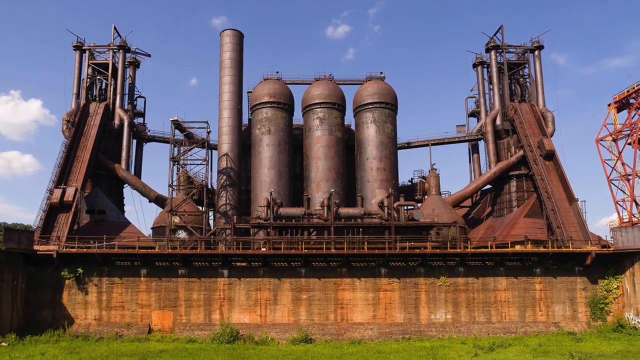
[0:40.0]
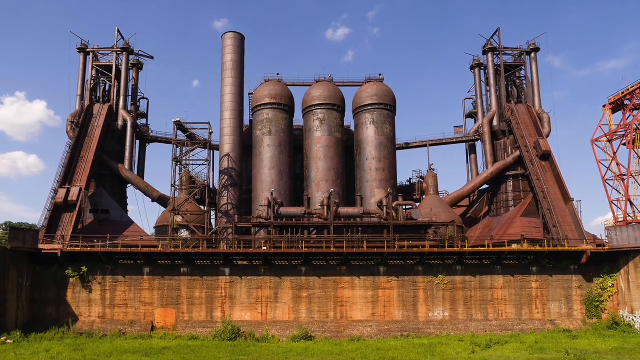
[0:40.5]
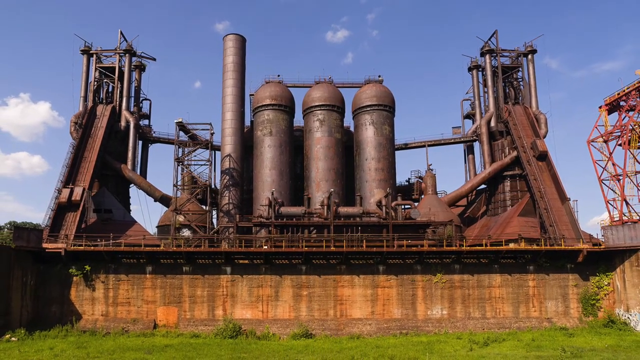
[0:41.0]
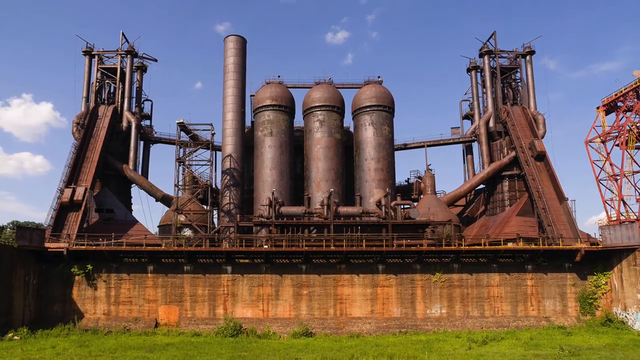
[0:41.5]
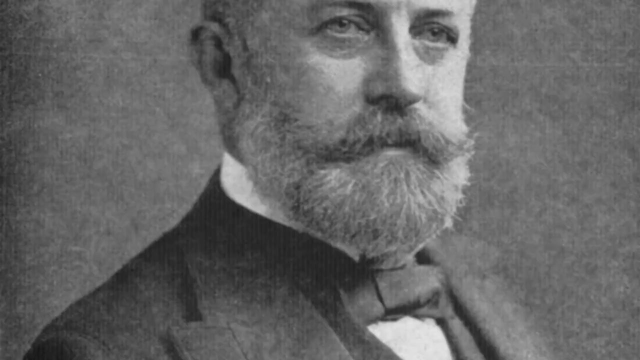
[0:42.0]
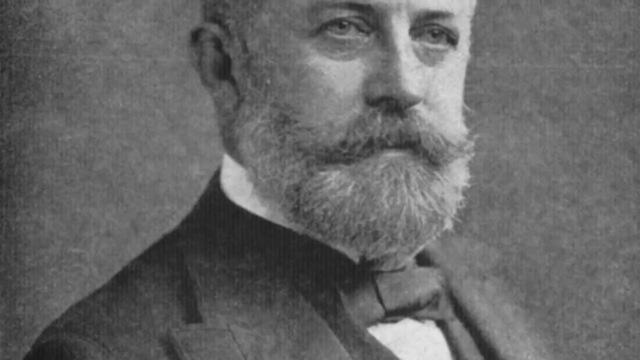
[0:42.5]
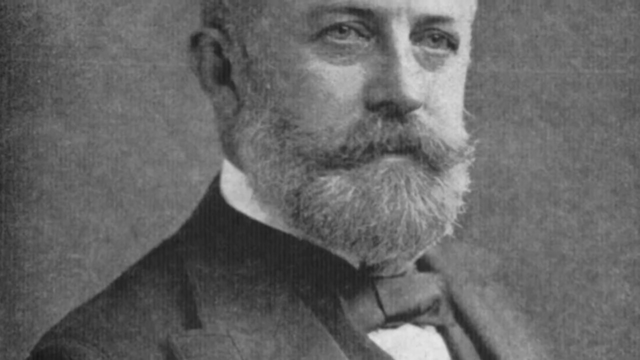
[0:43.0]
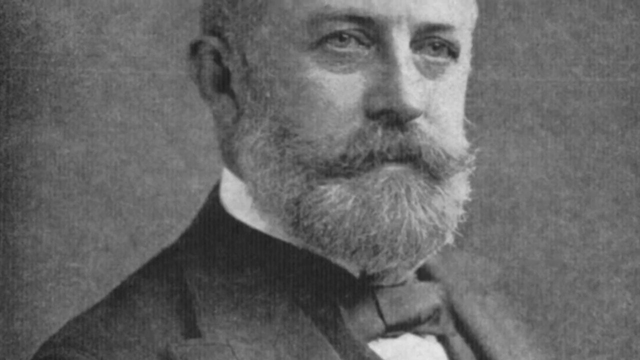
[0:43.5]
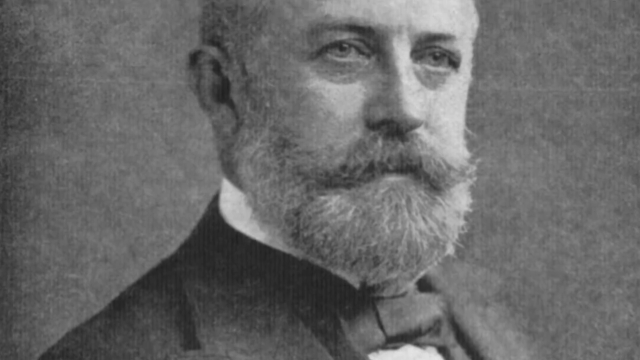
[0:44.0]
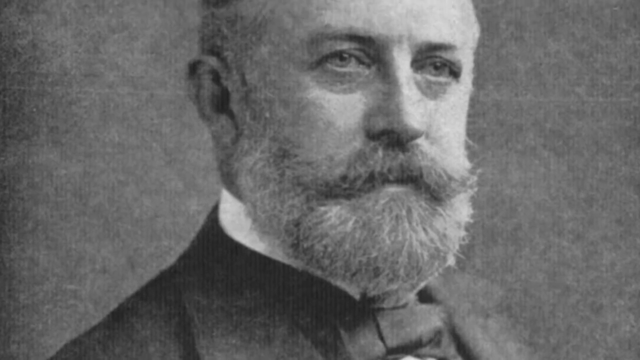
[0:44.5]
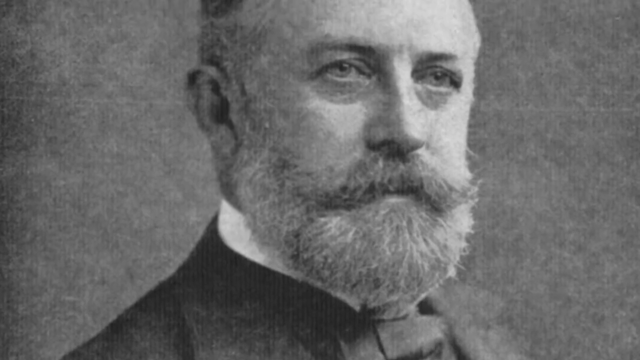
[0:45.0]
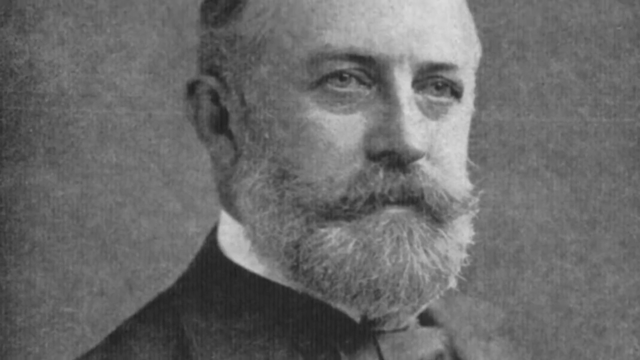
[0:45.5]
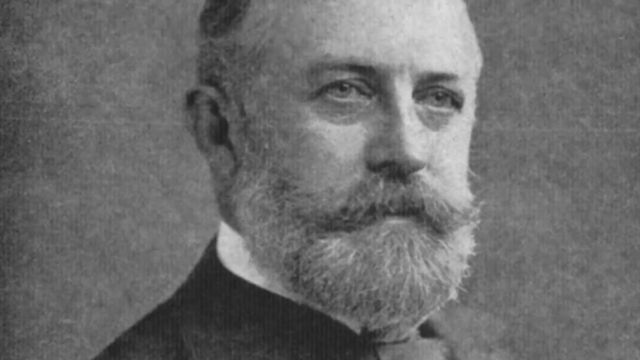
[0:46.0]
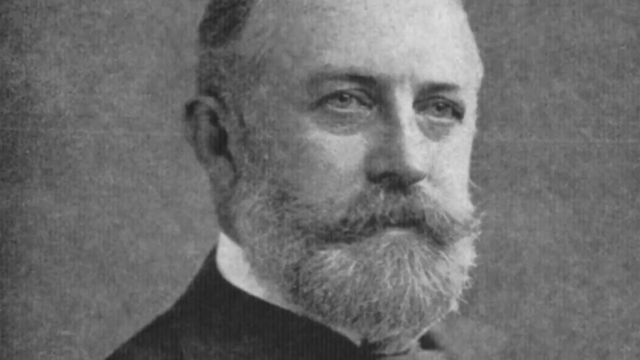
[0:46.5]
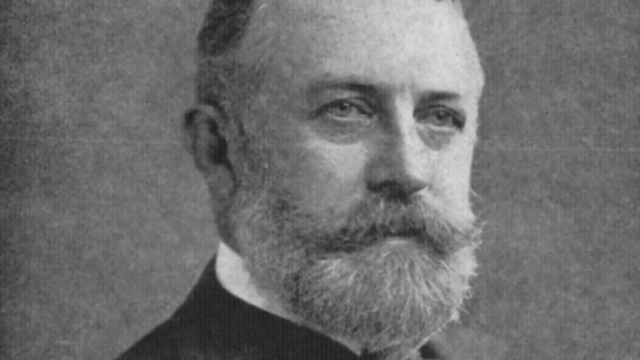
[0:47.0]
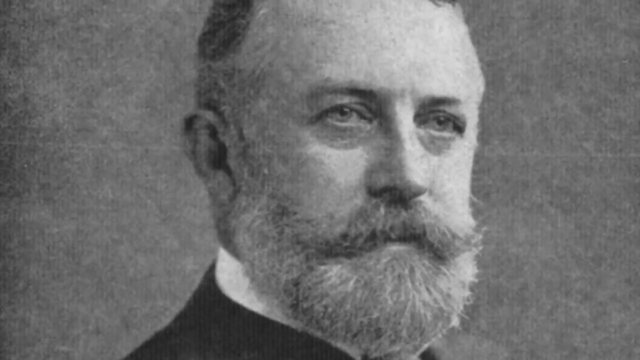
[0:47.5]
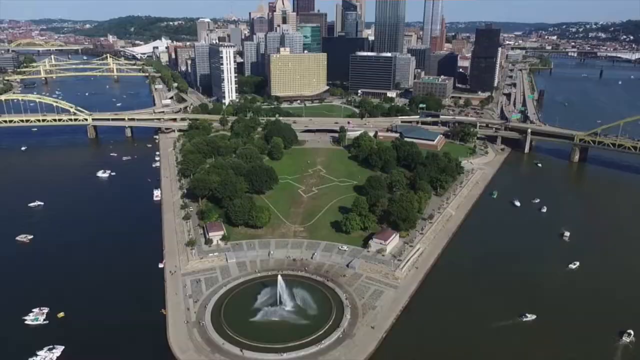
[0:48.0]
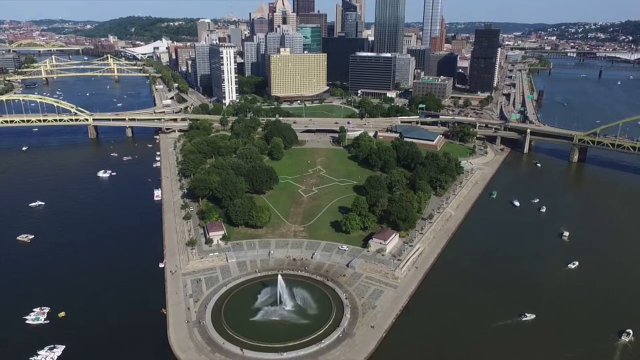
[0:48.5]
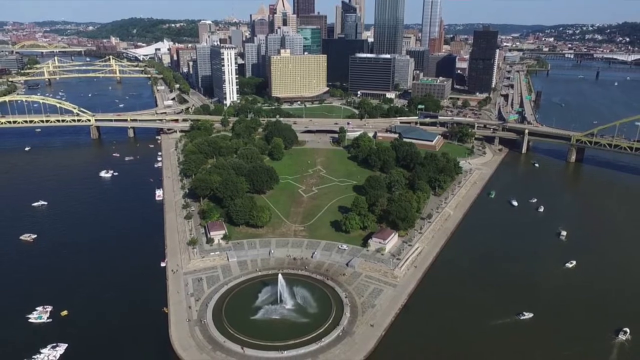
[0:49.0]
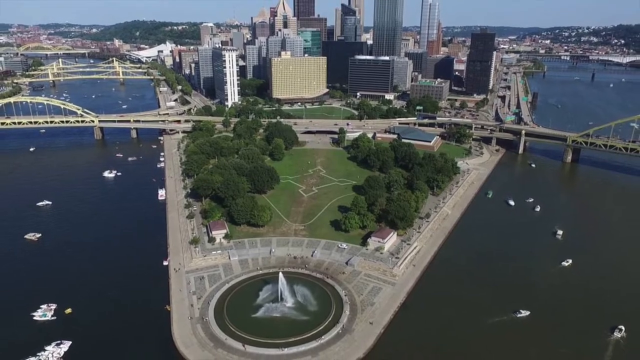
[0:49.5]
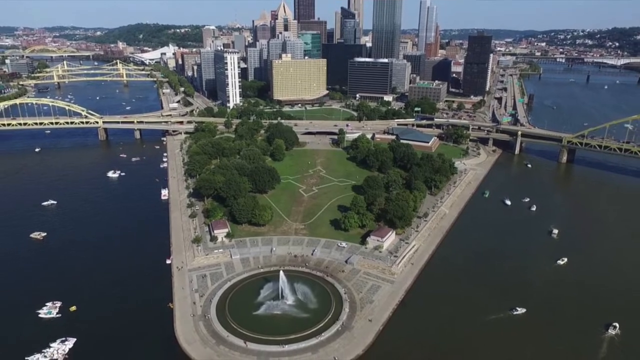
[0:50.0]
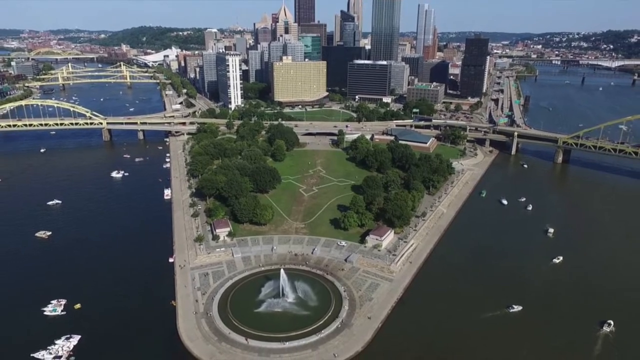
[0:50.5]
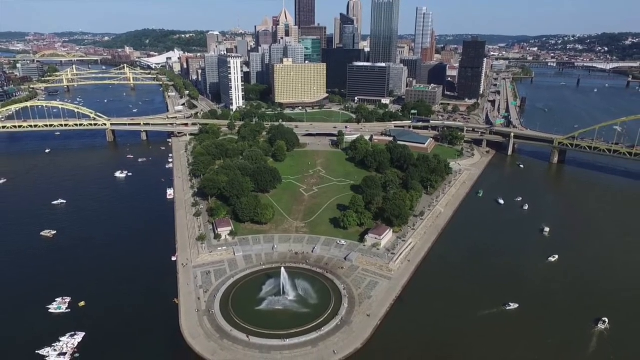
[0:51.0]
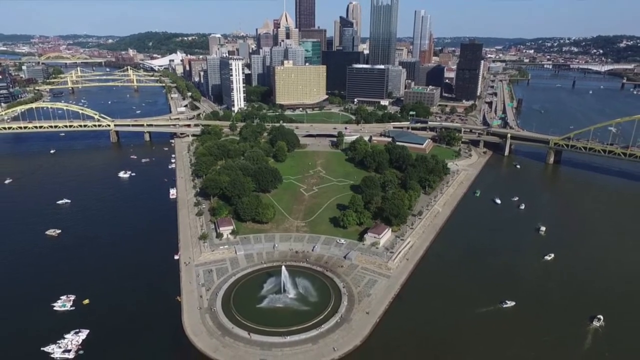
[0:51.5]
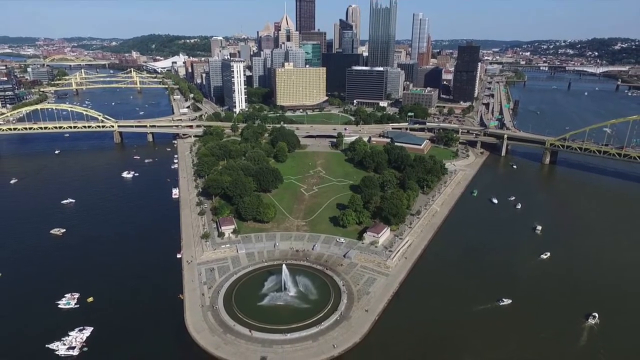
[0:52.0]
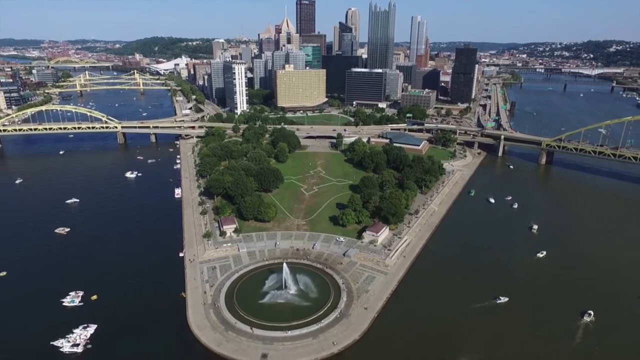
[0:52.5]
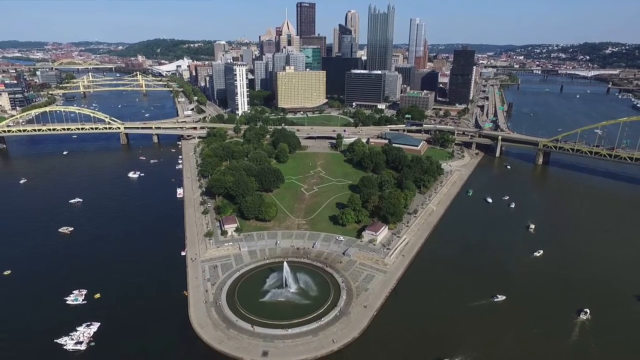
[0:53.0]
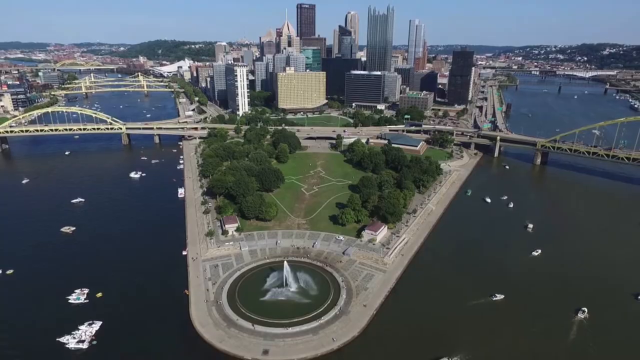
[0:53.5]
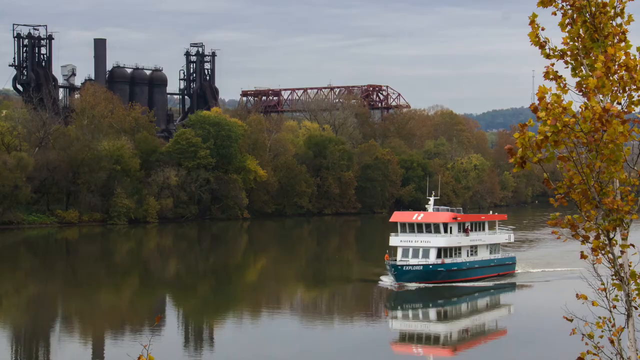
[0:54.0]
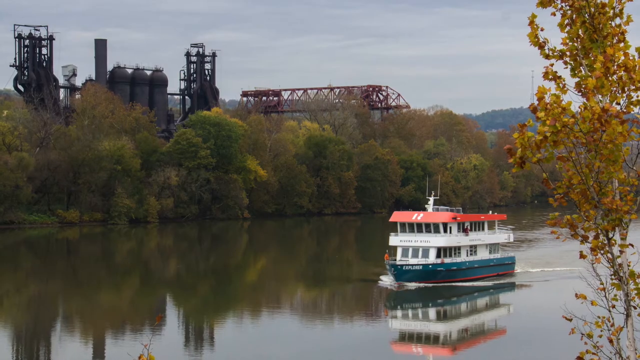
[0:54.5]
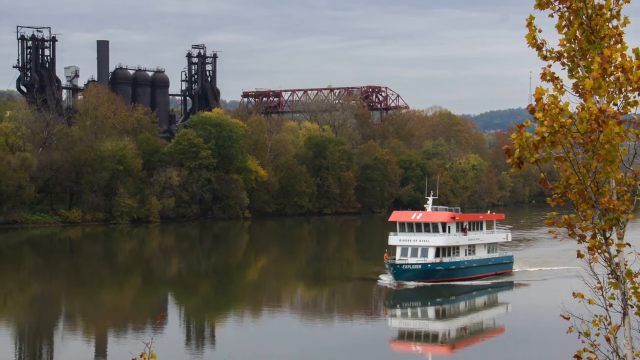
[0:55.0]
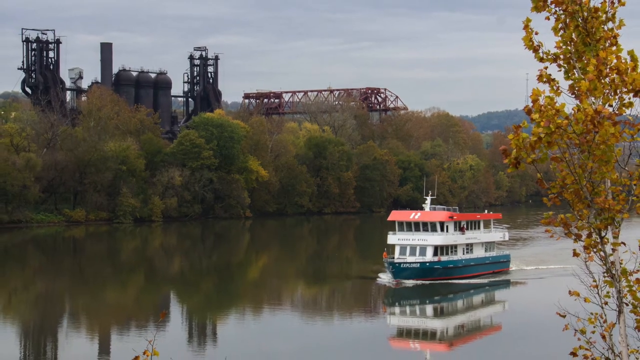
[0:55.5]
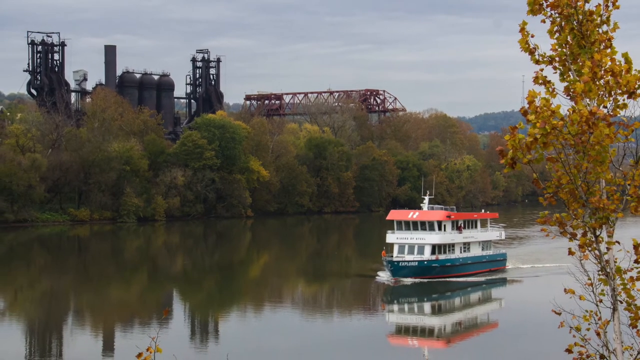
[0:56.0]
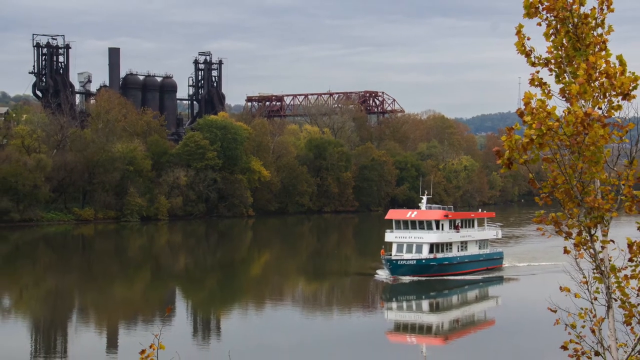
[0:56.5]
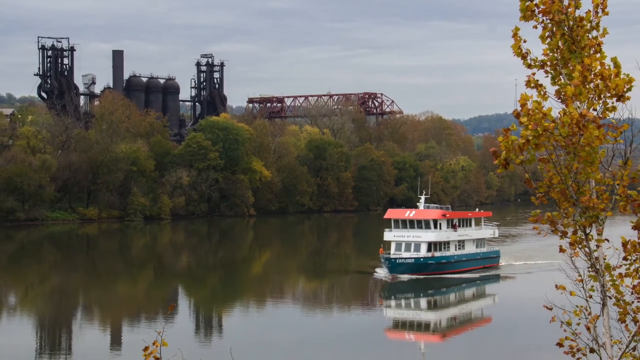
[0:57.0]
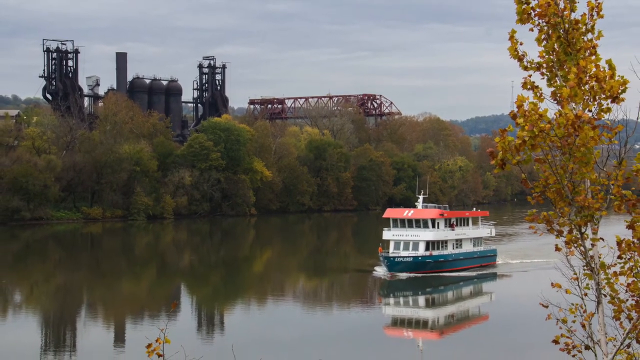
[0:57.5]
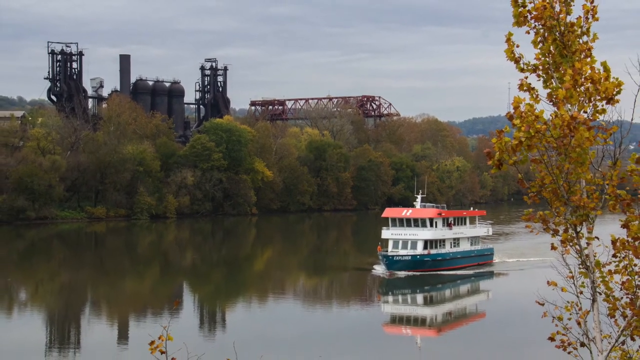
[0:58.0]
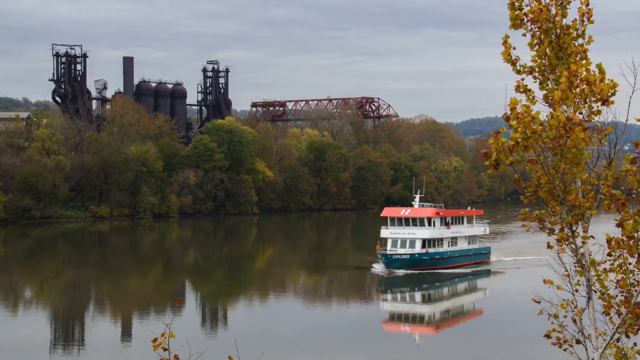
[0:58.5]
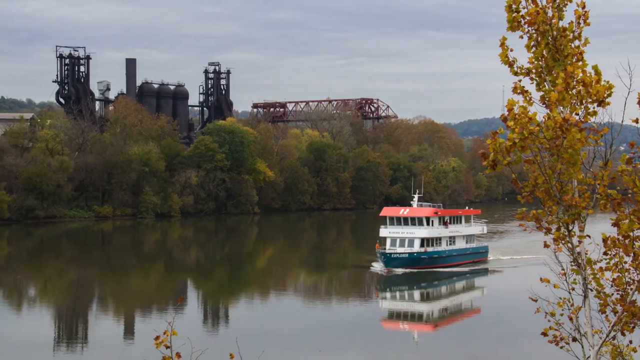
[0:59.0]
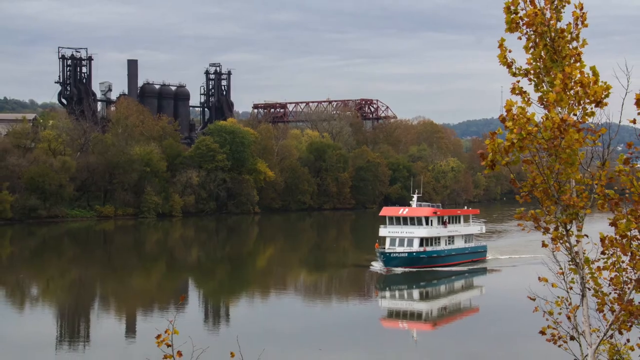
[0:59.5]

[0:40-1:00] The image of rusted silos continues as the camera zooms out, then transitions to a portrait of a man with a bushy mustache and a similarly bushy beard. The camera starts out viewing the bottom of the man's face and pans upward to show short hair. Next is an image of a modern city. On the bottom side is a park area with a fountain below it. On both sides there appears to be a river, and the land appears to extend down into a triangular point between the rivers. In the background there appears to be a downtown area with skyscrapers and other tall buildings, and bridges go over both rivers. The video then transitions to an image of a much more rural area, also with a river in the foreground. There is a boat on the river that appears to be some sort of cruise ship or yacht with two levels. In the background, on the bank of the river, is a densely wooded area, and there are silos and what appears to be a crane. The camera slowly zooms out from the image.